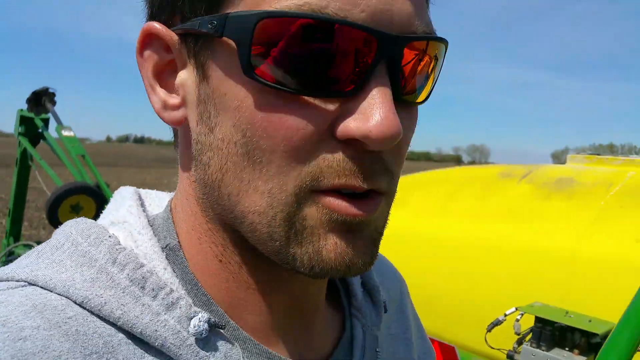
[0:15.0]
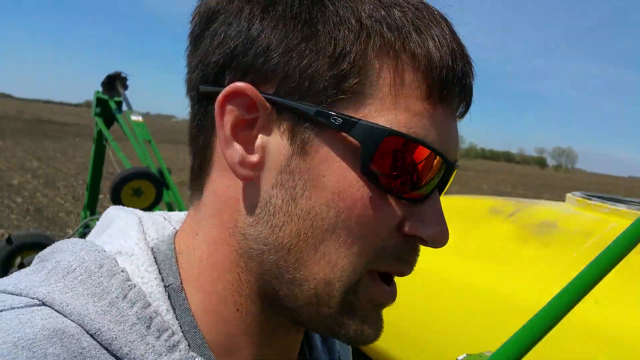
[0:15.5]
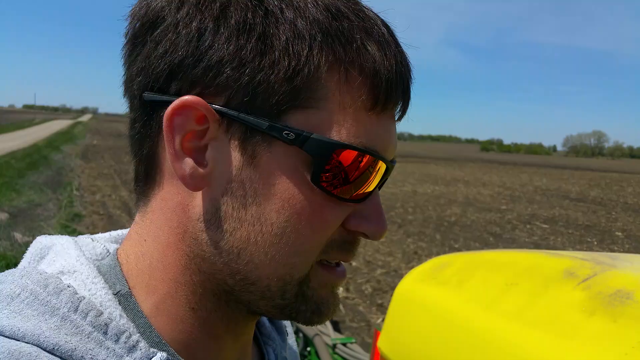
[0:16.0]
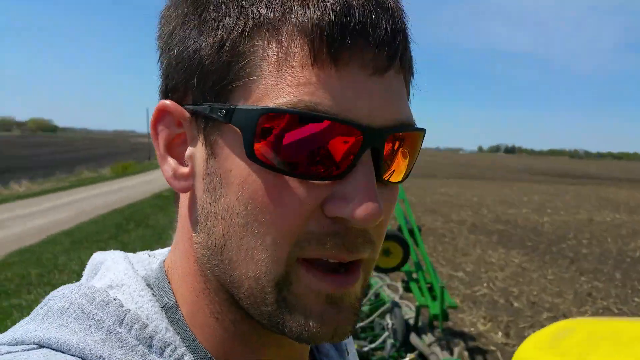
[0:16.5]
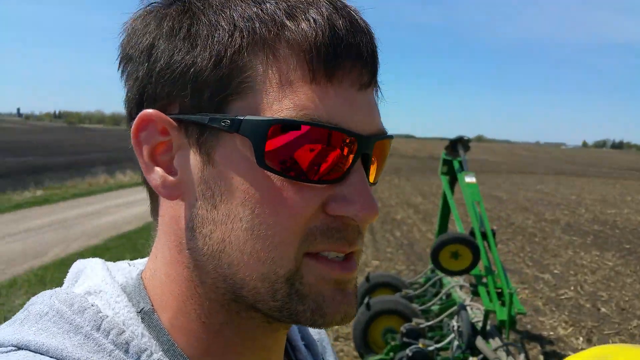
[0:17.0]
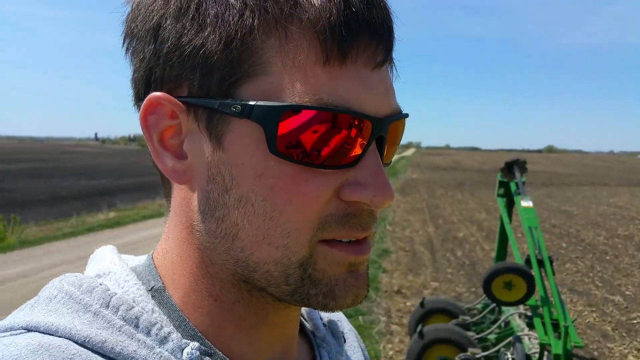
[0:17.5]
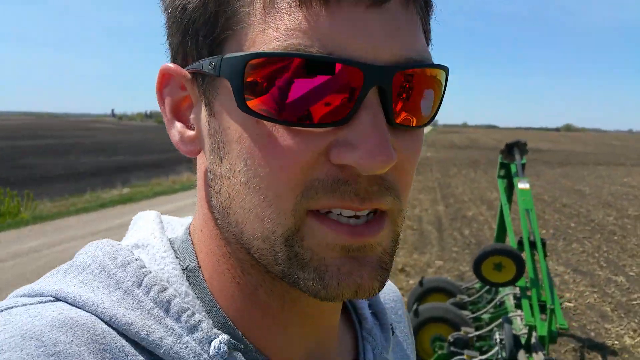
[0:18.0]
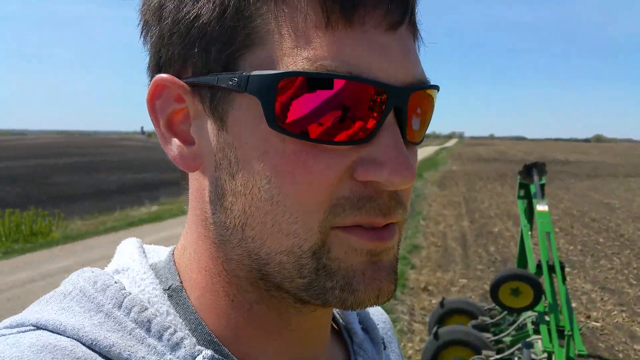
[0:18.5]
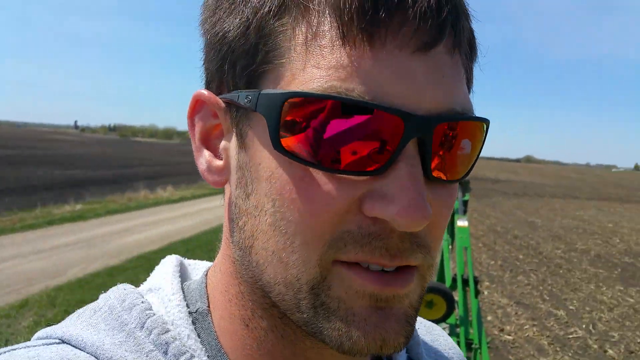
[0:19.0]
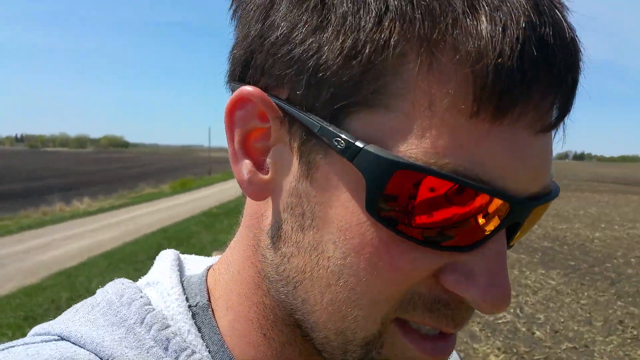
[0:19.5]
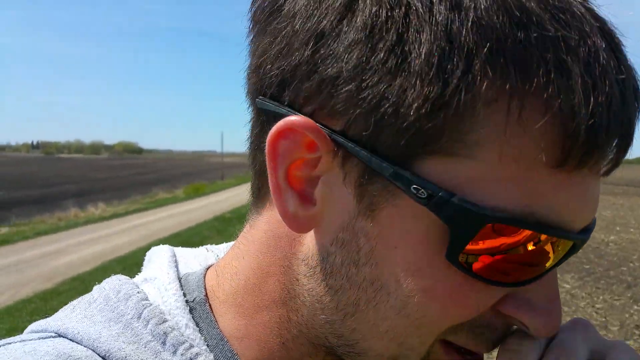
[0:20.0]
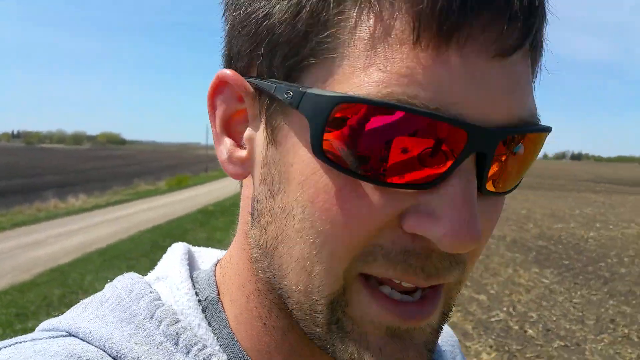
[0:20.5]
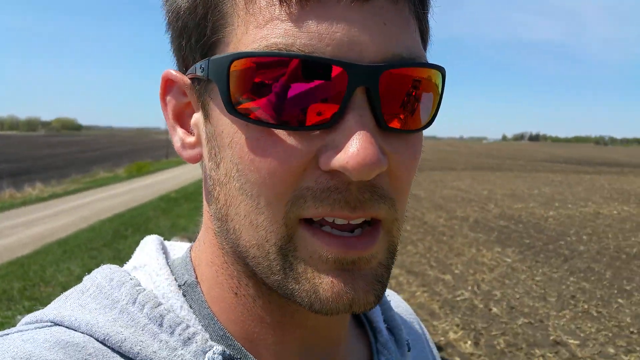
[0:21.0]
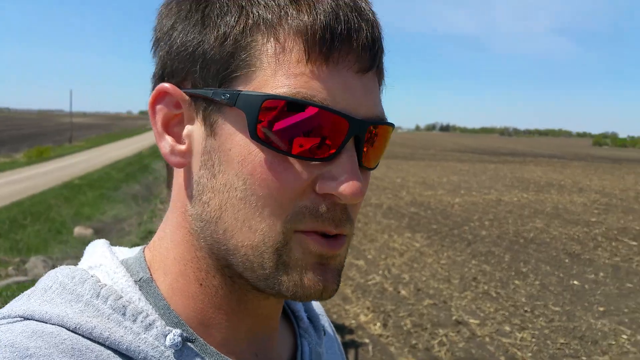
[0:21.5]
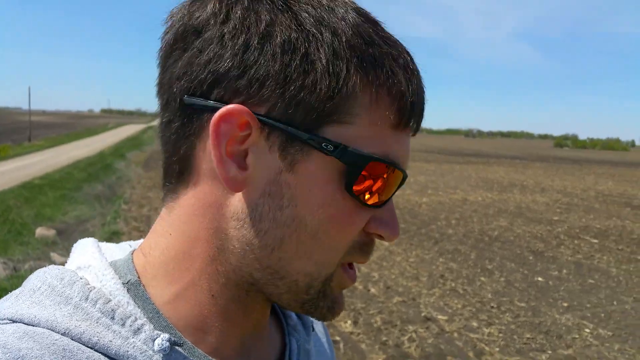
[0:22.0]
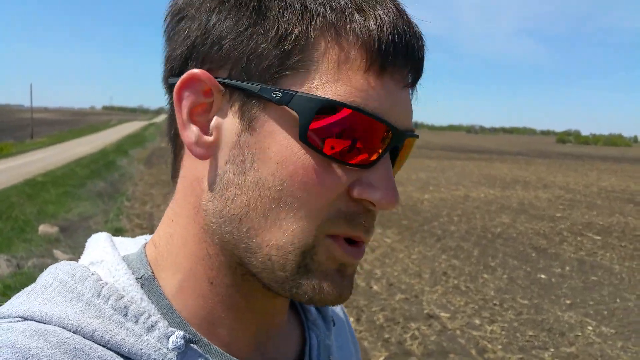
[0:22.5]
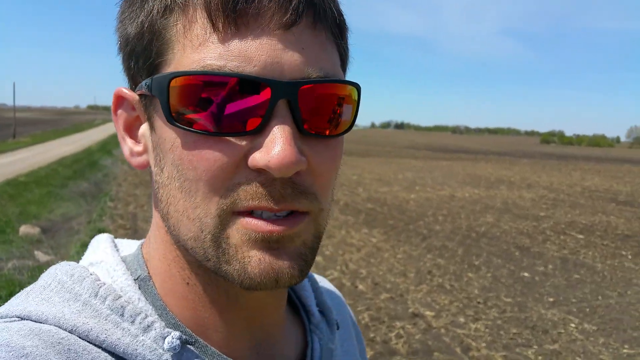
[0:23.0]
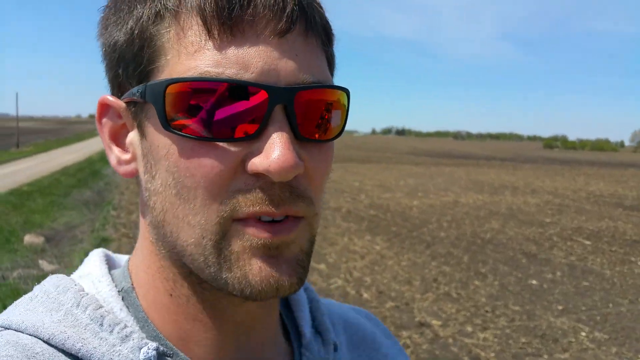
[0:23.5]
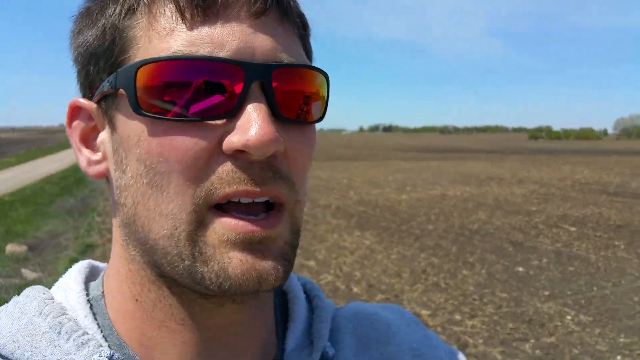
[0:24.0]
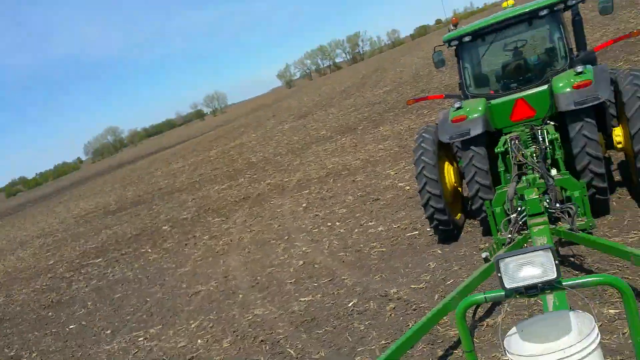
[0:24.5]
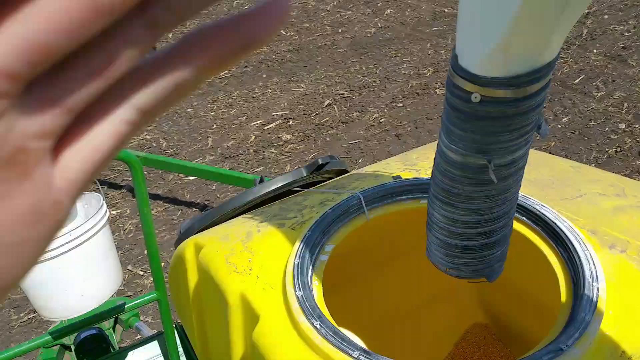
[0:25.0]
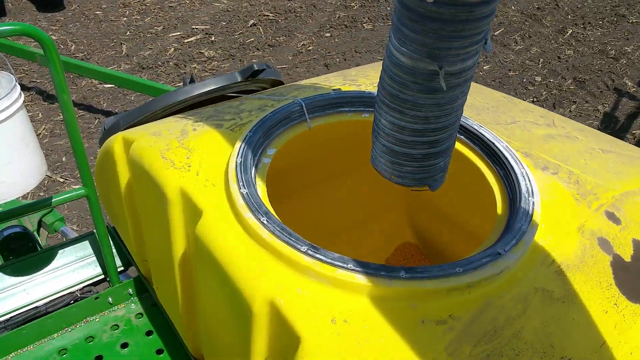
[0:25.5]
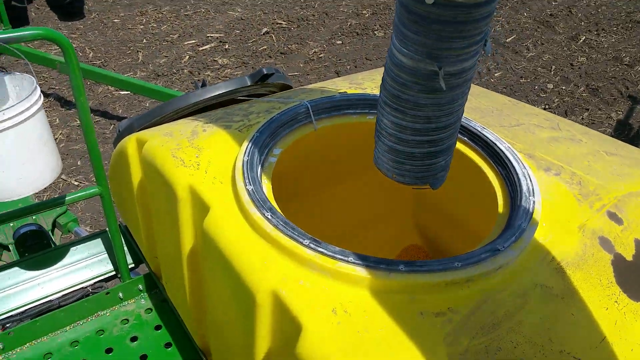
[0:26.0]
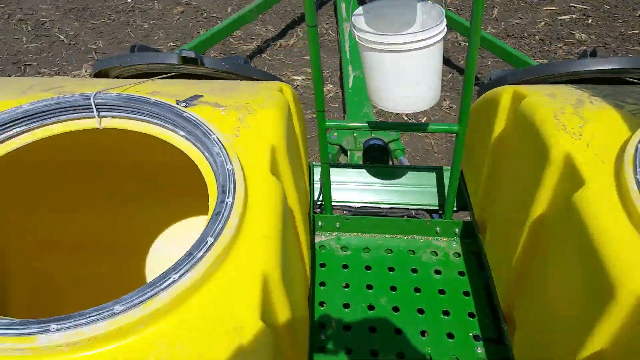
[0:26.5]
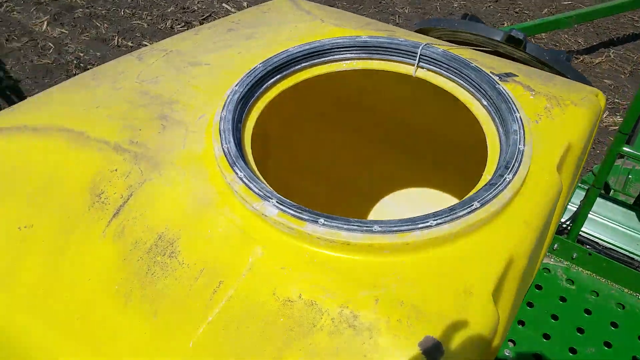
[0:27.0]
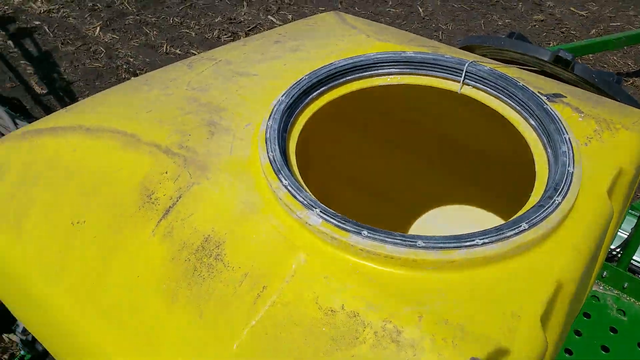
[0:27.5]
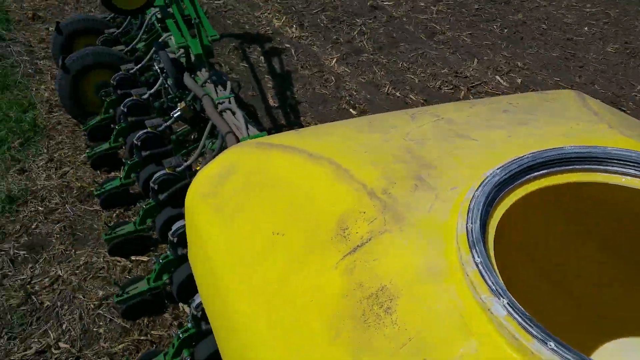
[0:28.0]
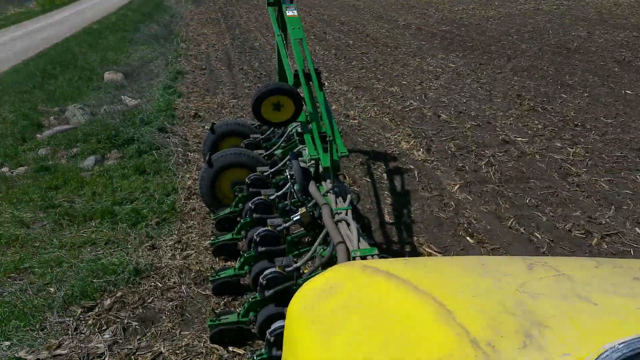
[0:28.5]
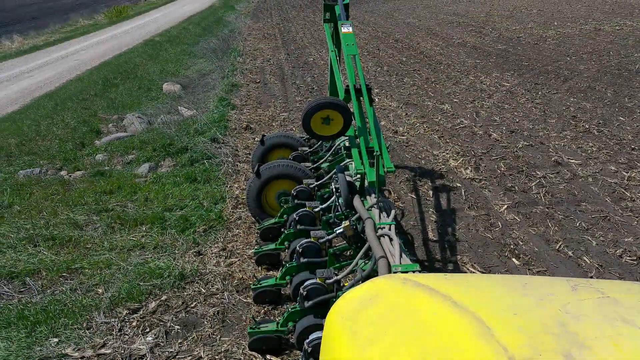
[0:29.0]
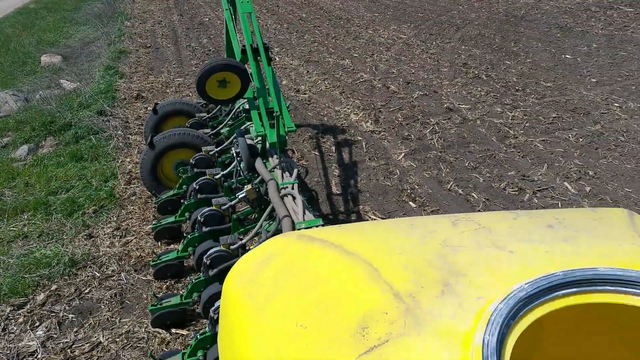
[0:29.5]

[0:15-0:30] A Caucasian man talks to the camera while holding it up in his hand, and his movement makes the camera shaky. He wears sunglasses with black frames and red and orange tinted lenses, making it hard to see his eyes. He has a very short beard around his face, his hair appears to be dark brown or black, and he seems to be wearing a gray hoodie, though it is hard to tell. He walks around the big field during the day, and another road is visible next to the field. He climbs on top of his machine, which has two big yellow bins, with a feeder pointing downwards towards the opening of one of the large yellow bins.